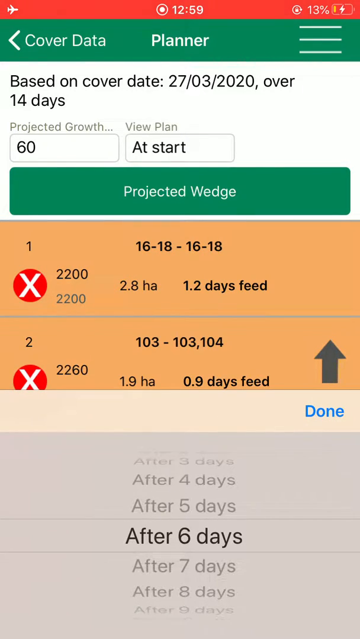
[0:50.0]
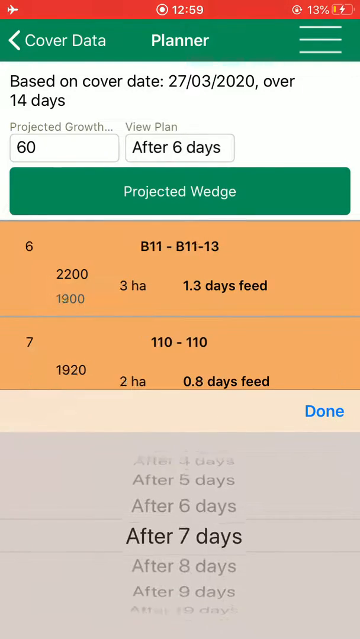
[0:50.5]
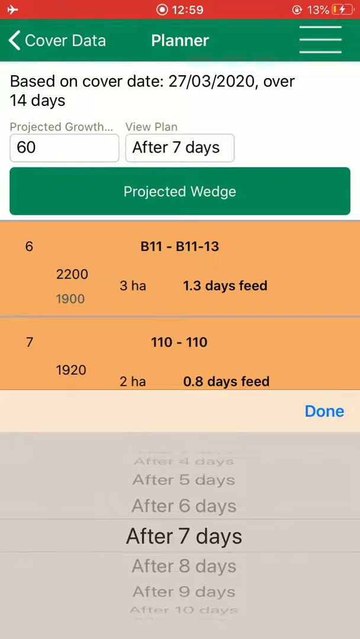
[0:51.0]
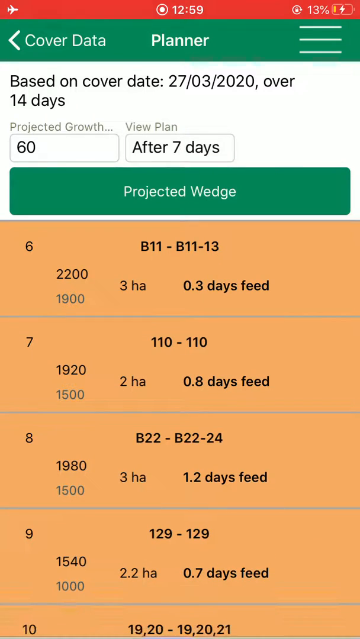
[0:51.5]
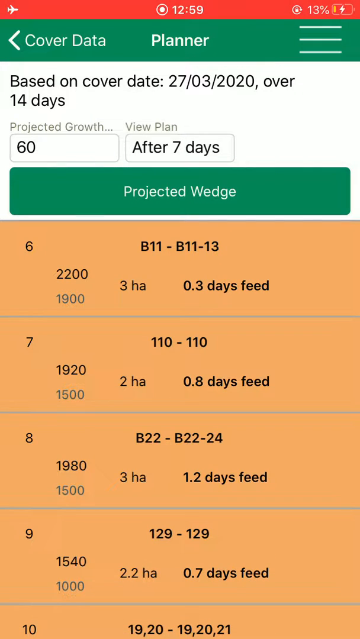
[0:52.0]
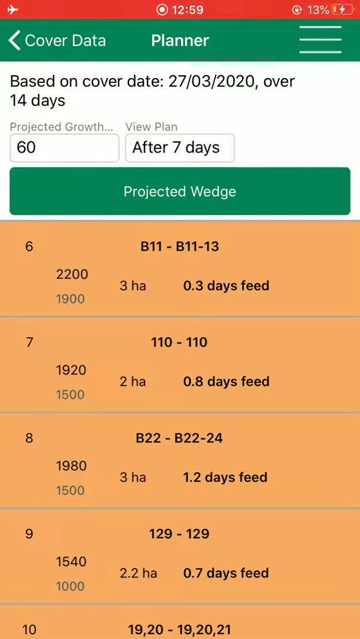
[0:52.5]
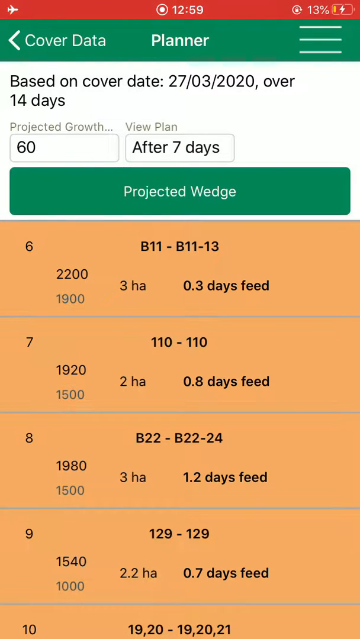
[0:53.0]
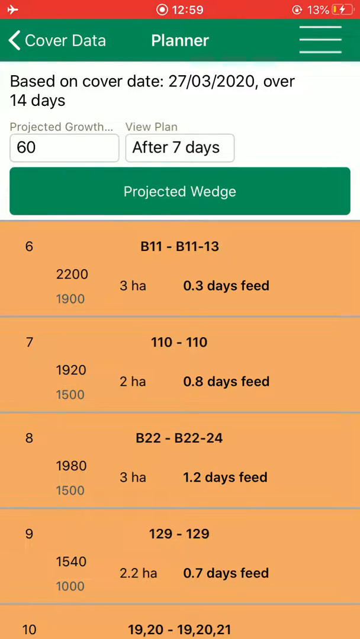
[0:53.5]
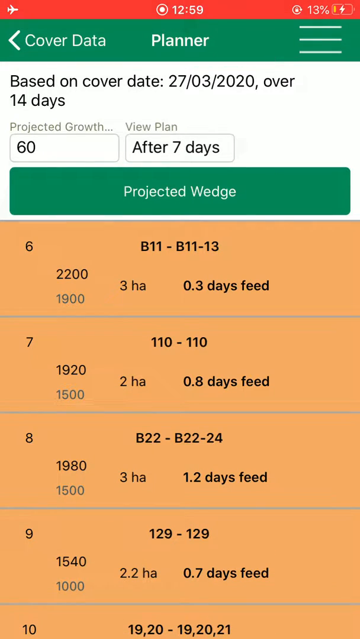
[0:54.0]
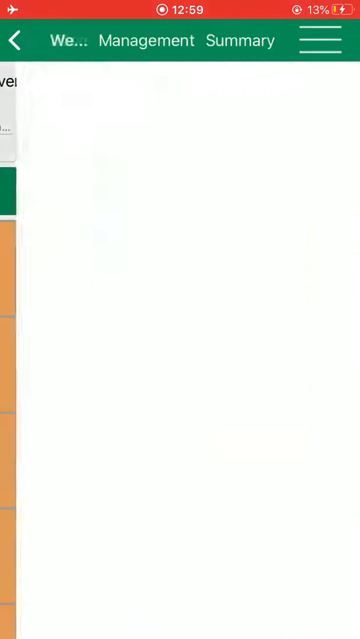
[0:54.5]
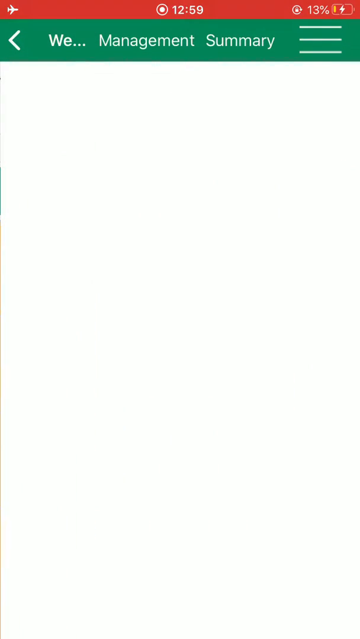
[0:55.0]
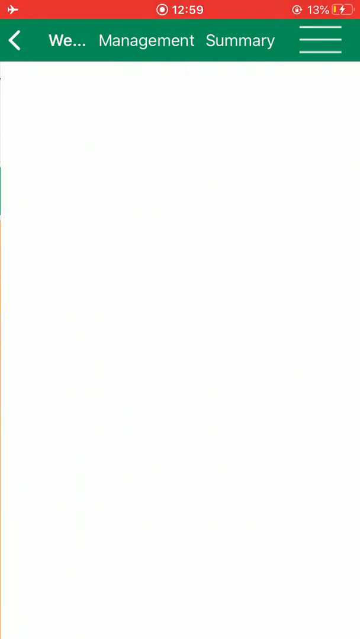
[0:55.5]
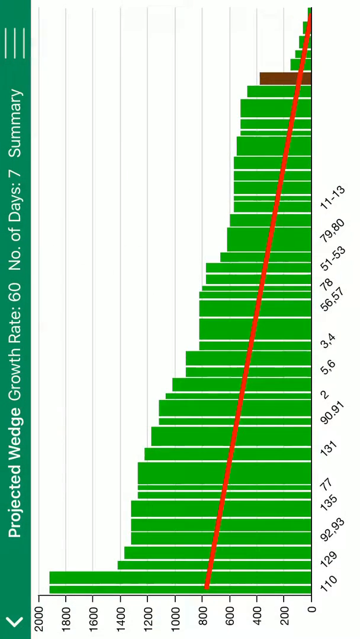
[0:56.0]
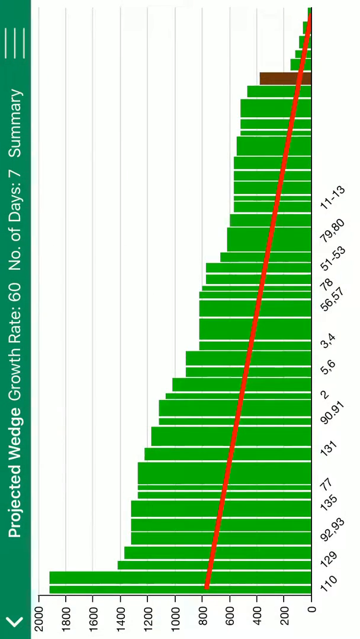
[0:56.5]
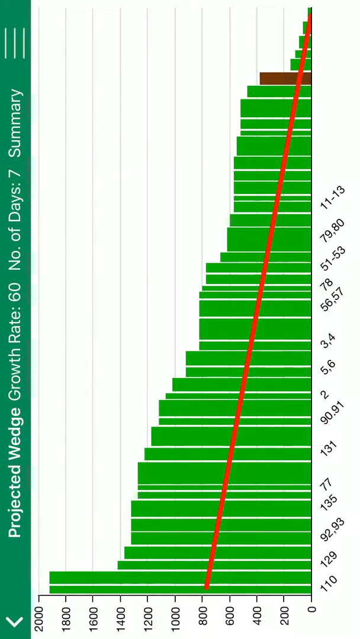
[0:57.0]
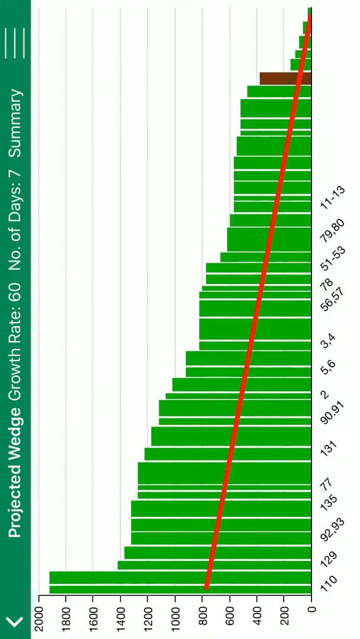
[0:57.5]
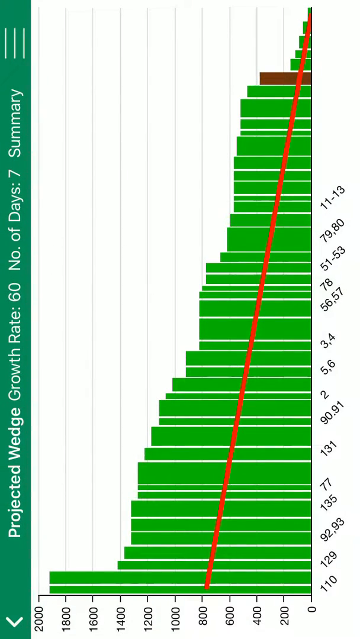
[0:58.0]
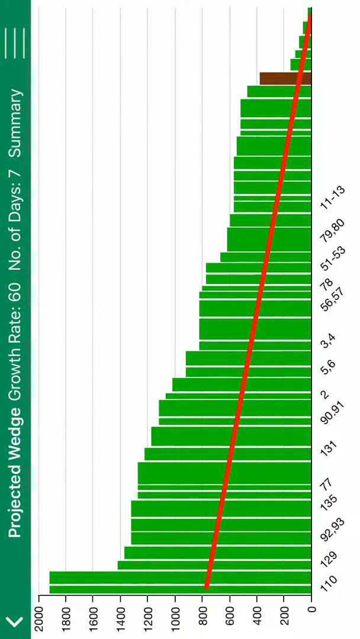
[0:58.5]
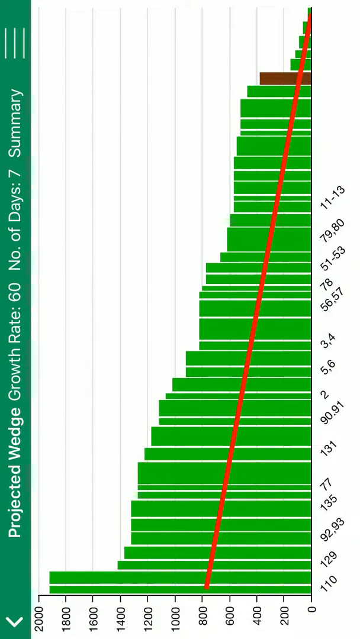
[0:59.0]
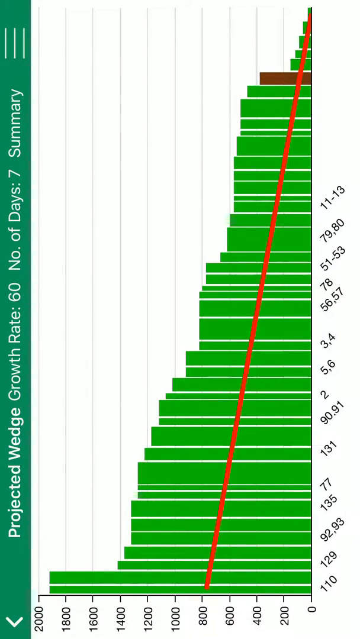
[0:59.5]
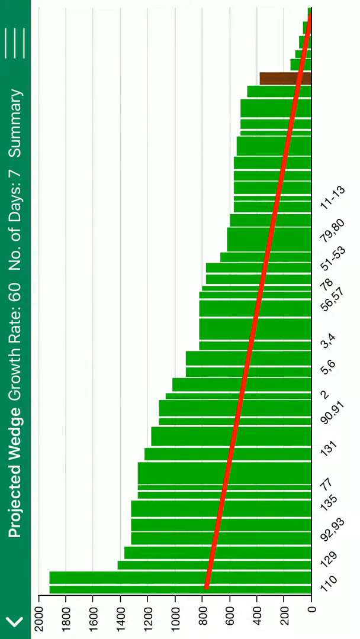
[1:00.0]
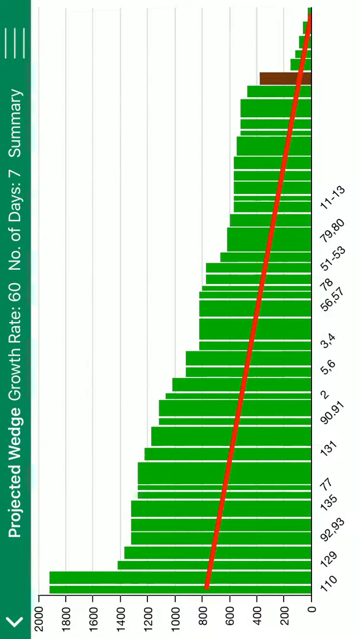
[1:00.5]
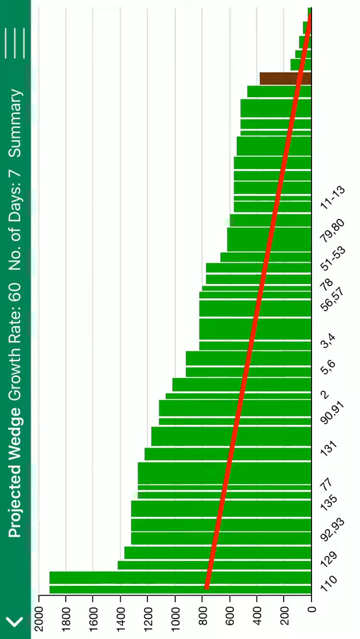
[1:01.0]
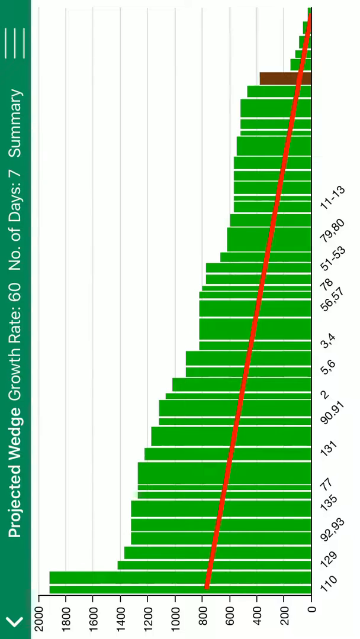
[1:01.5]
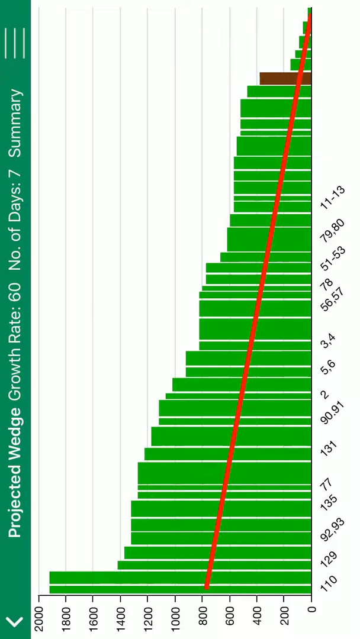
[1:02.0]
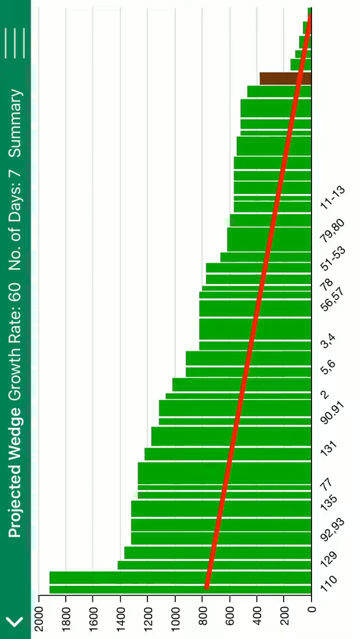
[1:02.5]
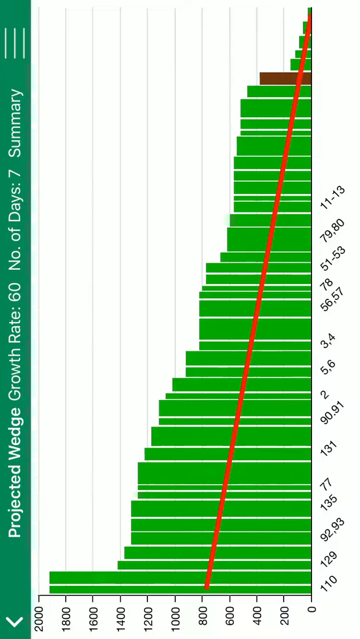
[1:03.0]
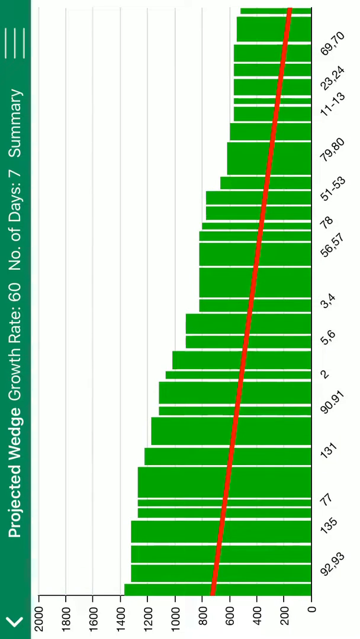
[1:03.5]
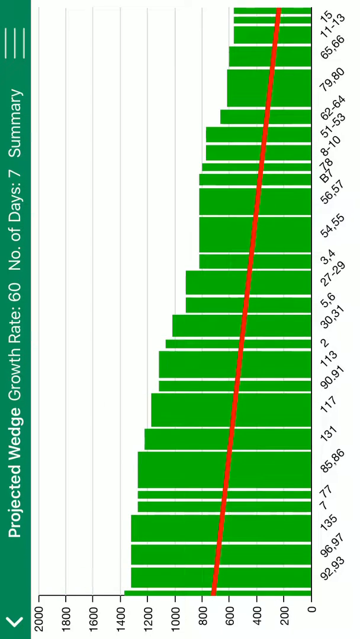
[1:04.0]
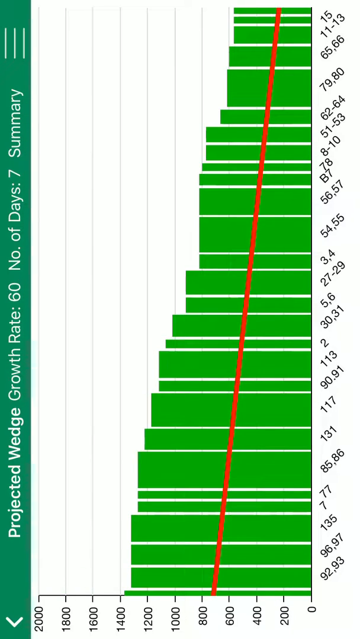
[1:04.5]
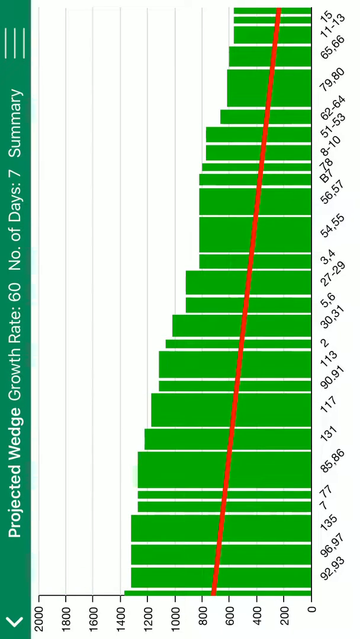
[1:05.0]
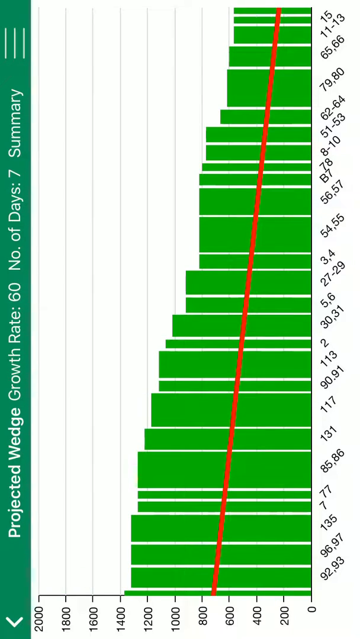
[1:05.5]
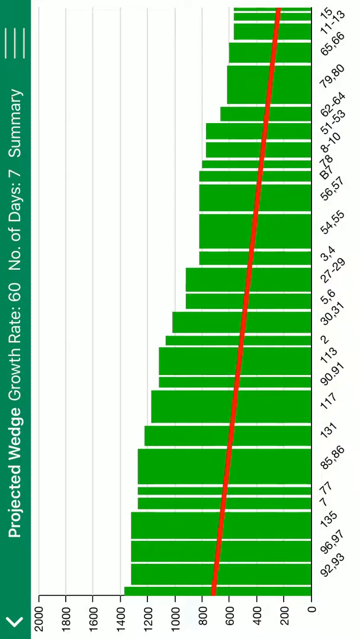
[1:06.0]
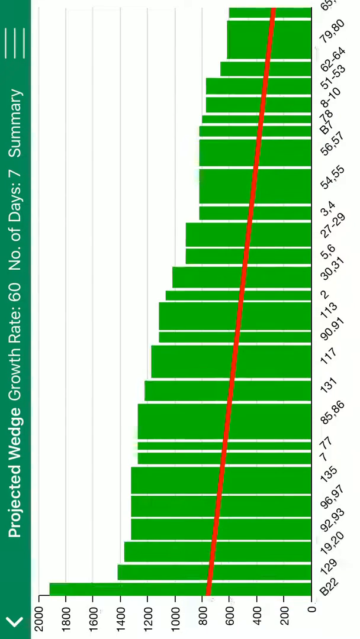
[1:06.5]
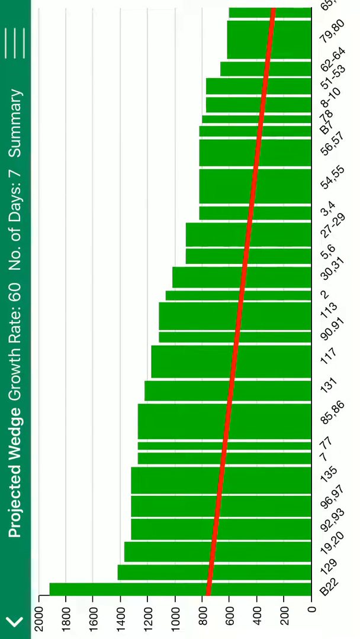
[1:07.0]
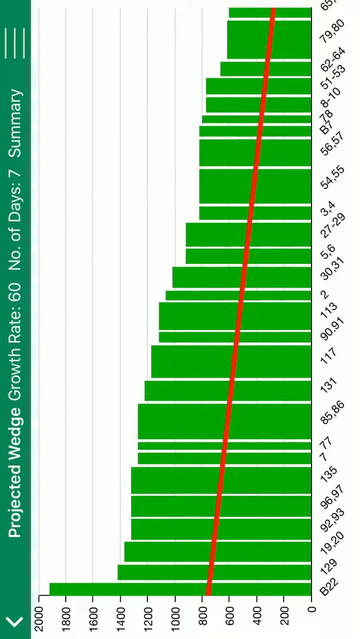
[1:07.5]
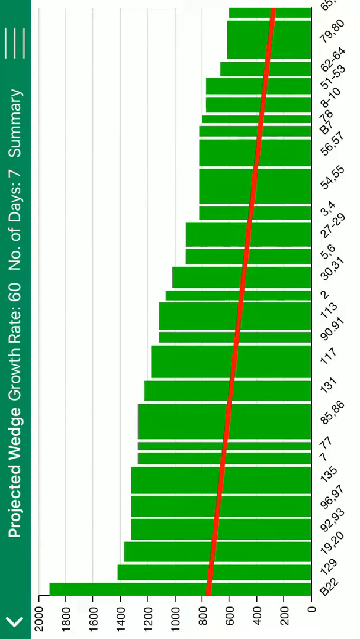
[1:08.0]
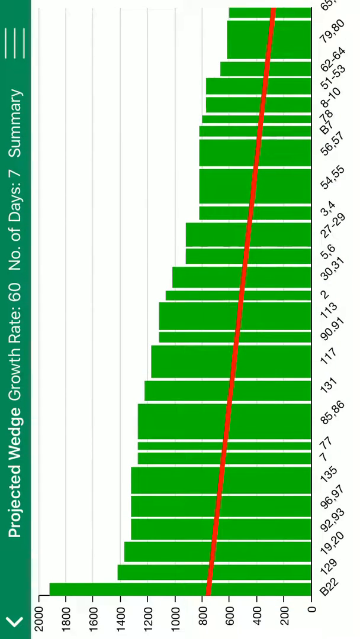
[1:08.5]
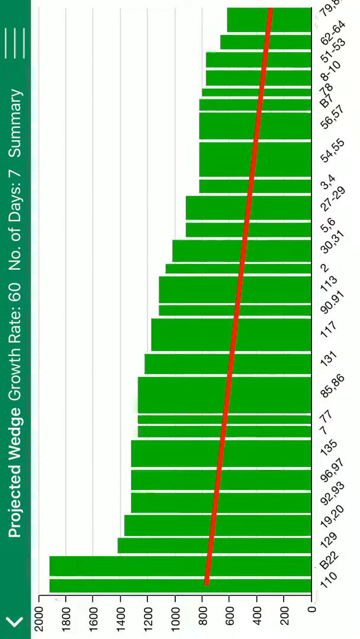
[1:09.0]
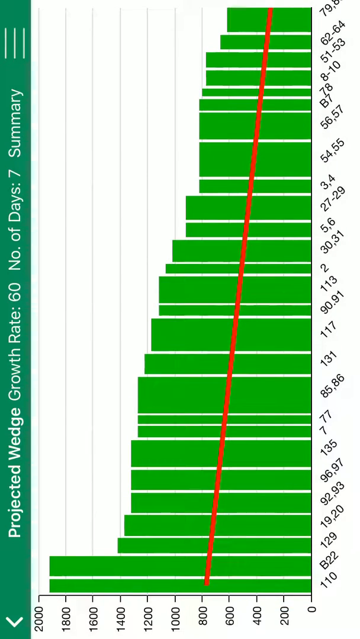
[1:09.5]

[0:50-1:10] On the same screen showing "cover data" and "planner" at the top, the user changes one set of data. In the window labeled "view plan", the user clicks on "at start" and chooses from a list that includes "after two days", "after three days" and "after four days", selecting "after seven days". The window that said "at start" now says "after seven days". As soon as this is selected, the app changes to a new screen, and the user turns the phone into landscape mode. The top green rectangle now says "projected wedge growth rate 60, number of days seven, summary". Below it is a bar chart with green bars and a red line of best fit, a graph of the projected wedge growth rate with values decreasing over time.